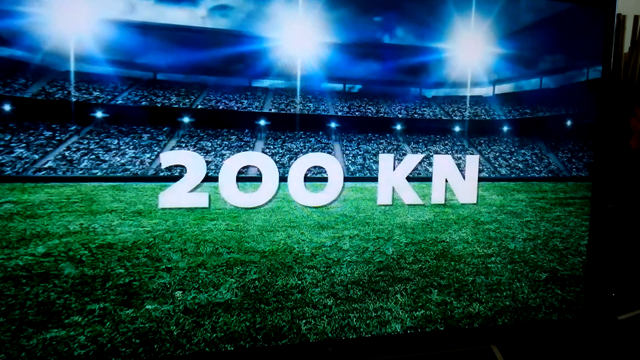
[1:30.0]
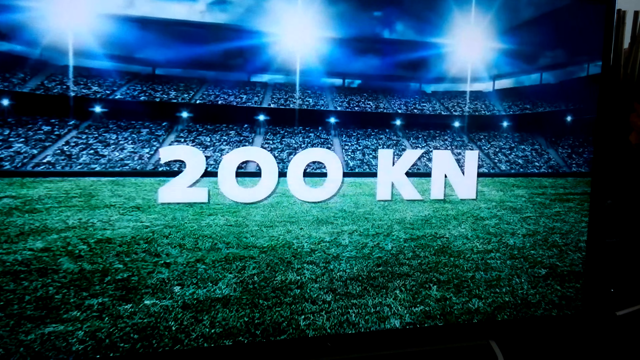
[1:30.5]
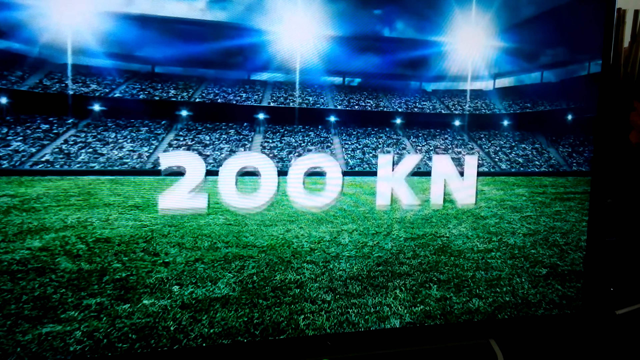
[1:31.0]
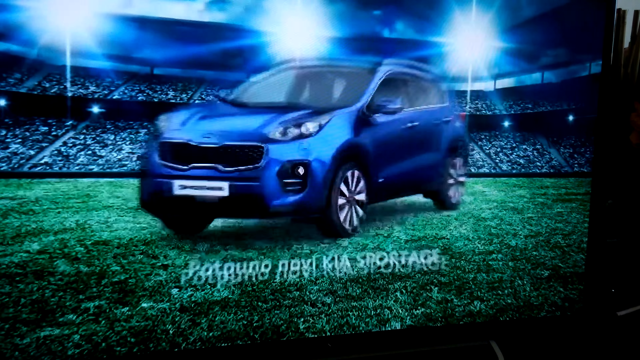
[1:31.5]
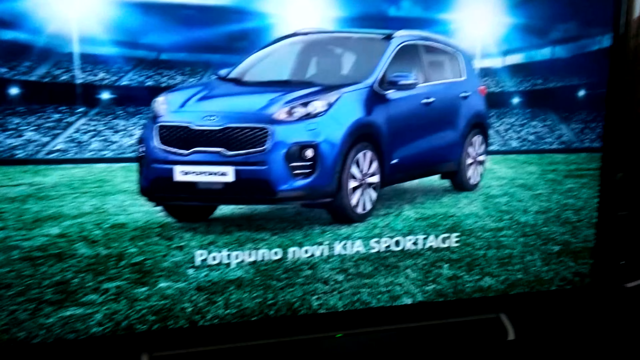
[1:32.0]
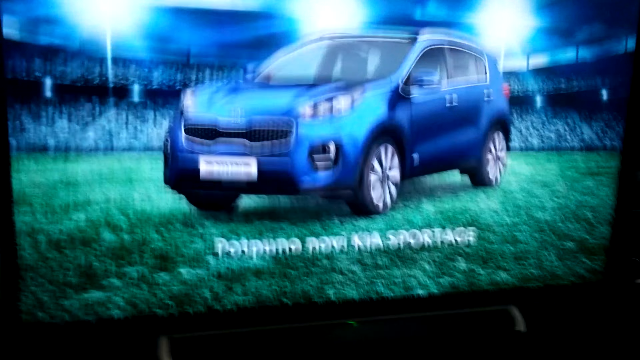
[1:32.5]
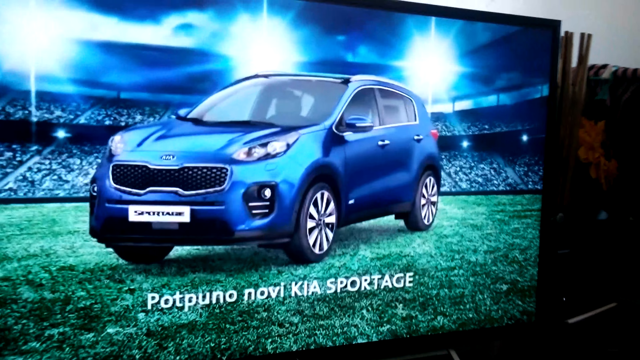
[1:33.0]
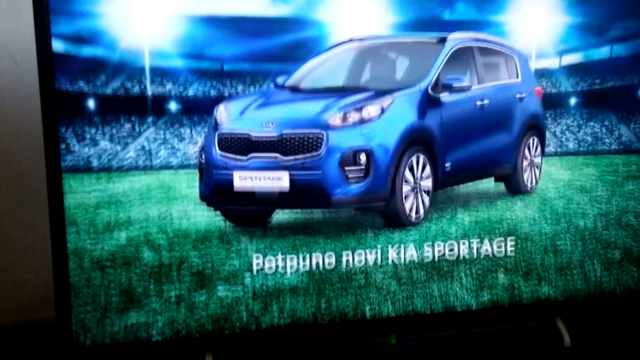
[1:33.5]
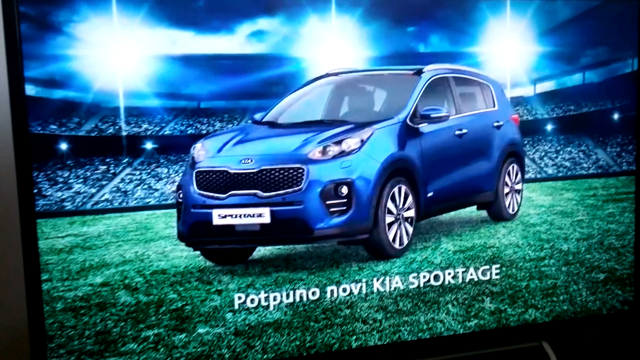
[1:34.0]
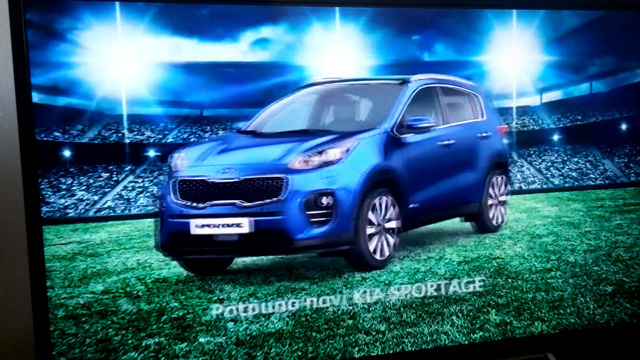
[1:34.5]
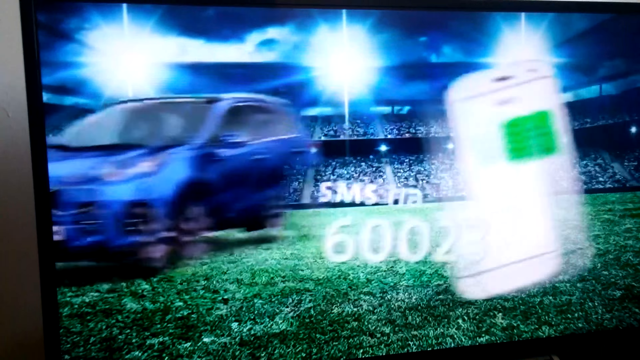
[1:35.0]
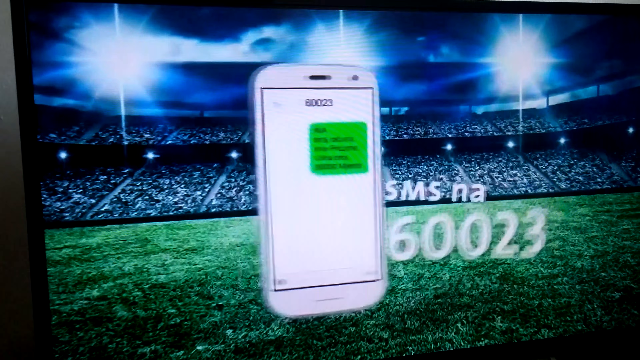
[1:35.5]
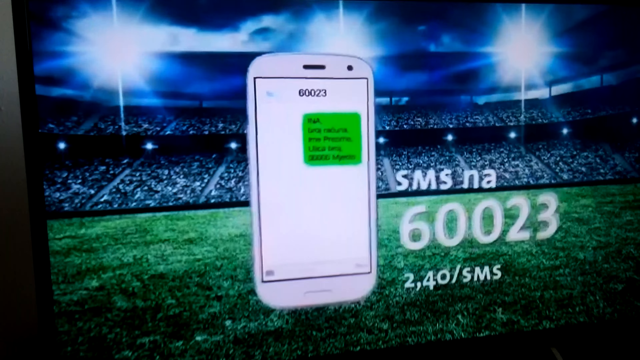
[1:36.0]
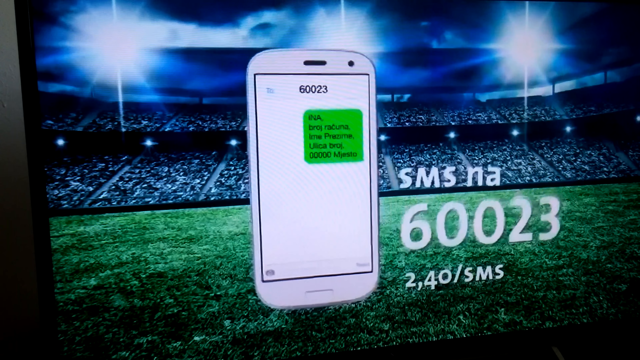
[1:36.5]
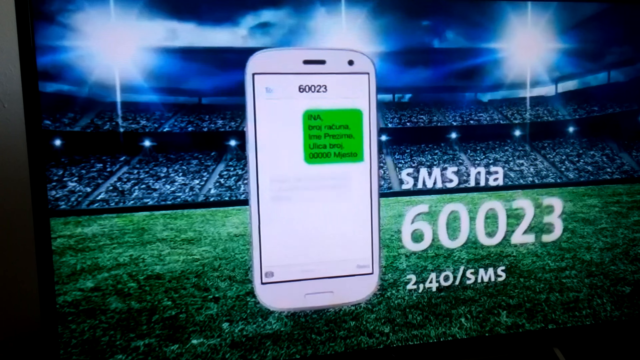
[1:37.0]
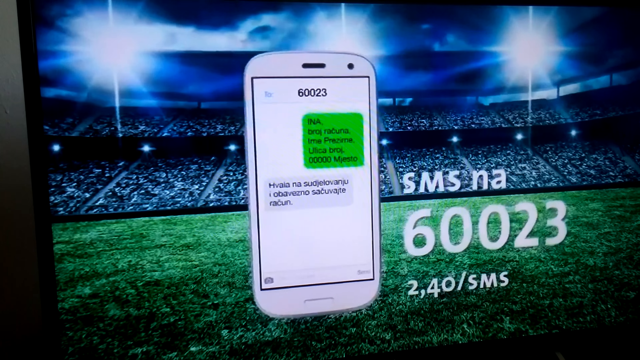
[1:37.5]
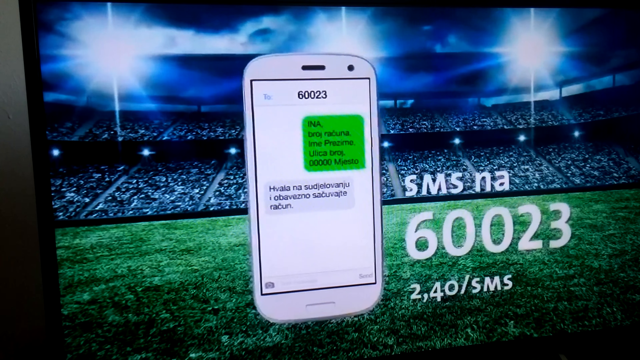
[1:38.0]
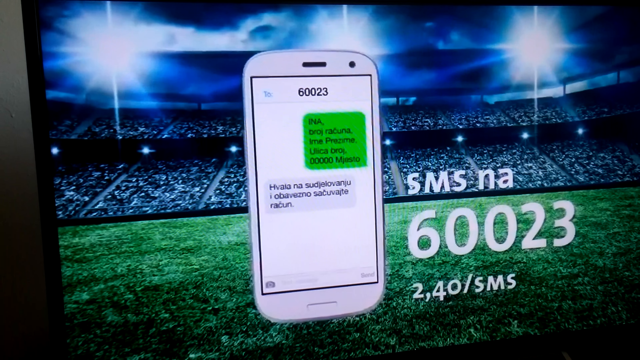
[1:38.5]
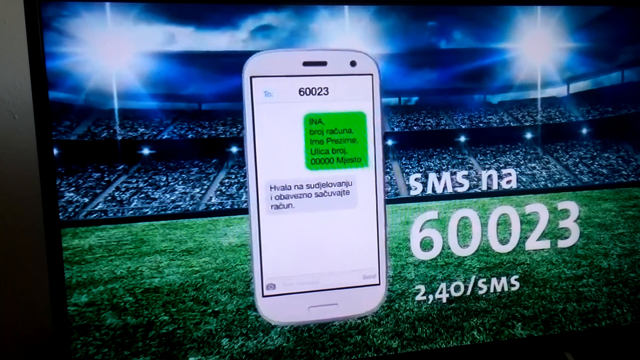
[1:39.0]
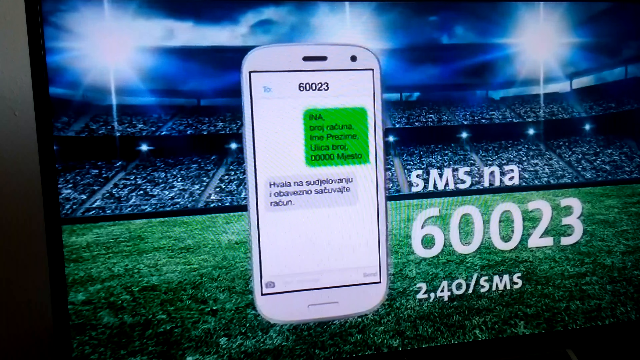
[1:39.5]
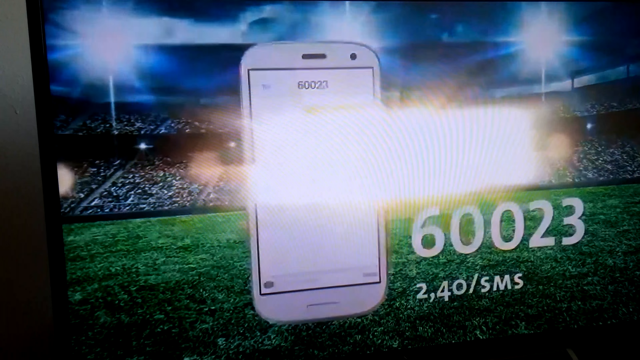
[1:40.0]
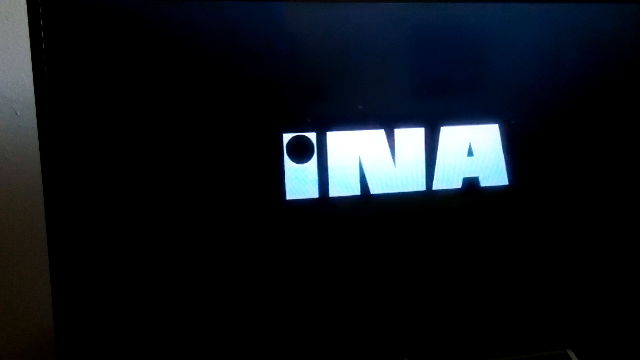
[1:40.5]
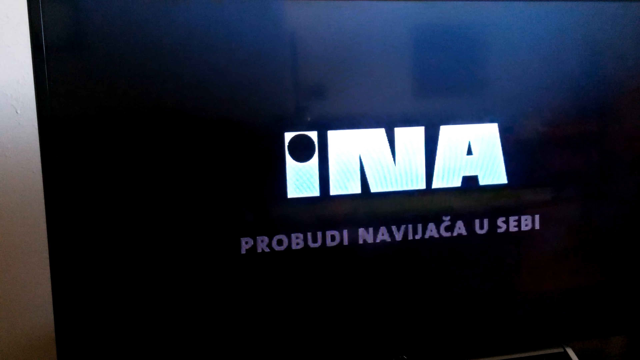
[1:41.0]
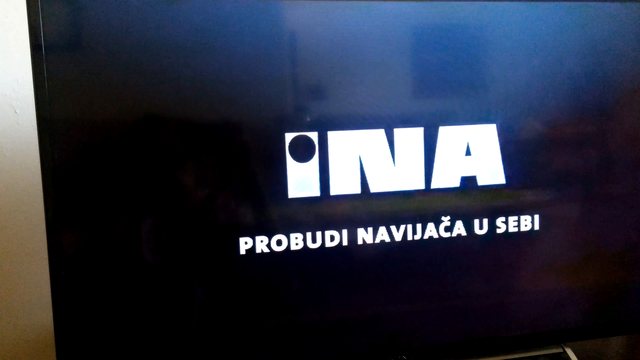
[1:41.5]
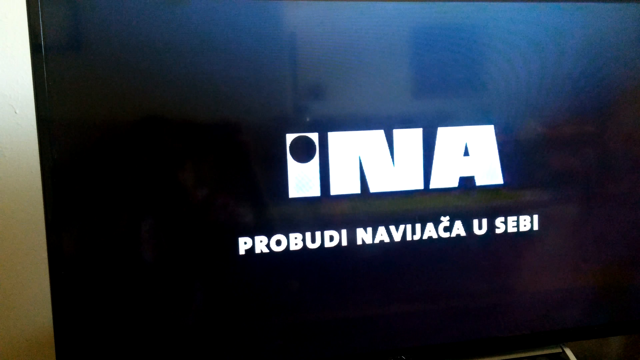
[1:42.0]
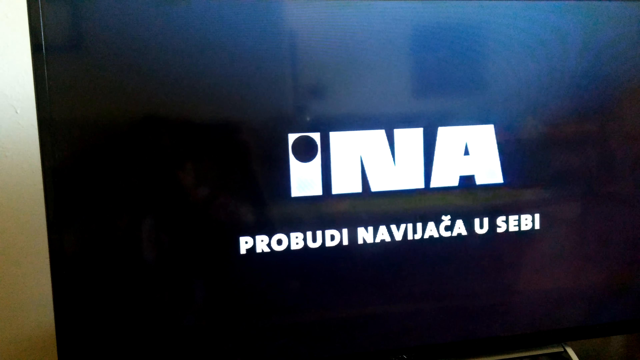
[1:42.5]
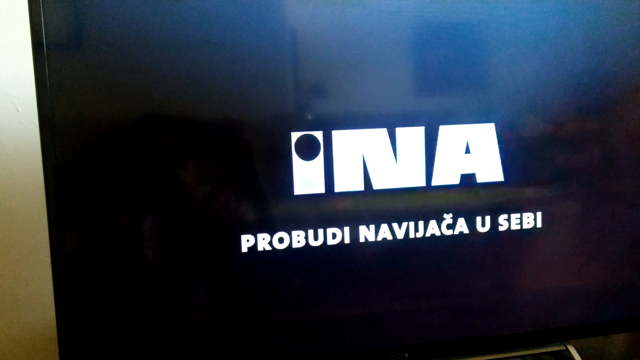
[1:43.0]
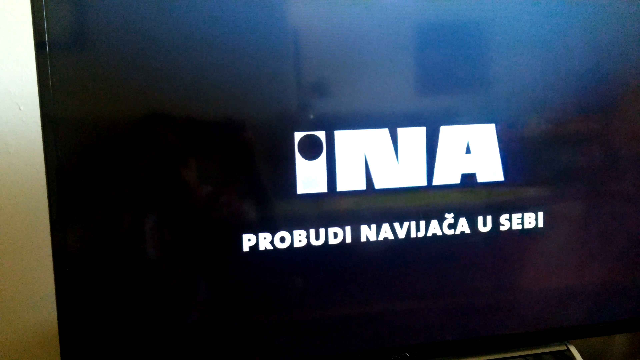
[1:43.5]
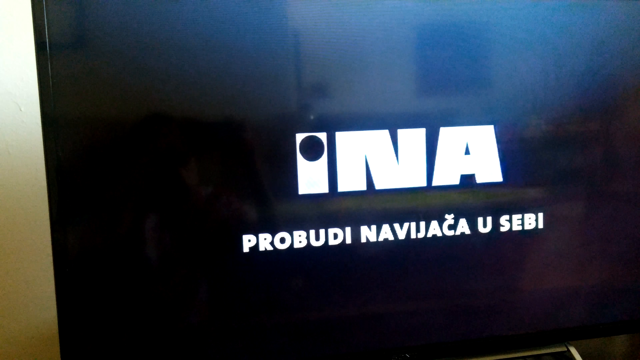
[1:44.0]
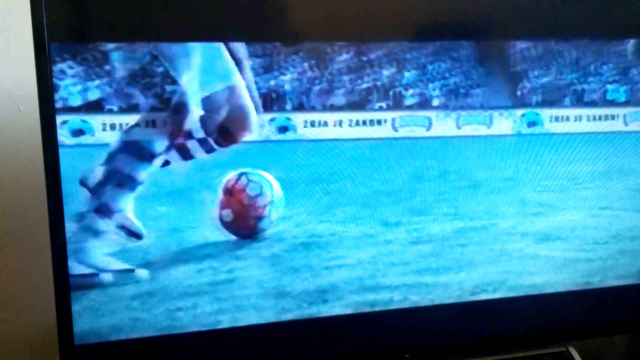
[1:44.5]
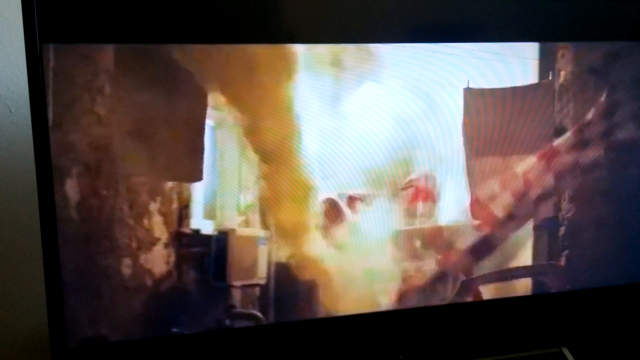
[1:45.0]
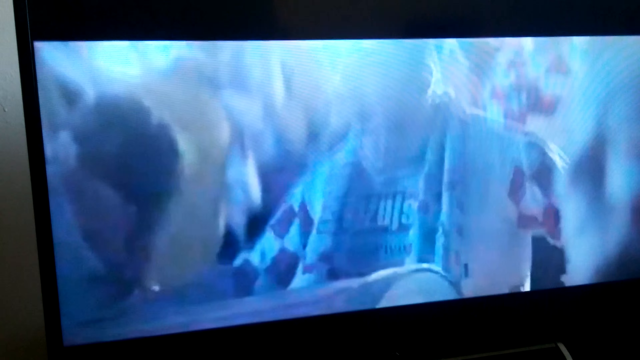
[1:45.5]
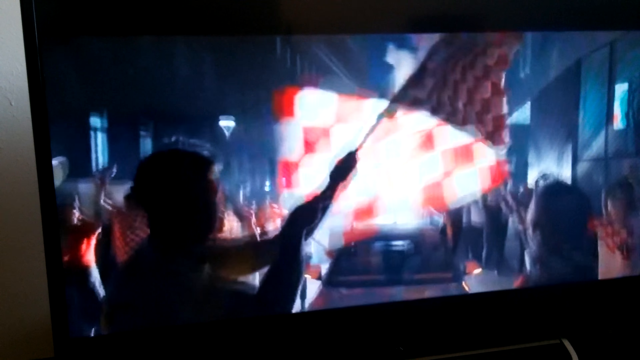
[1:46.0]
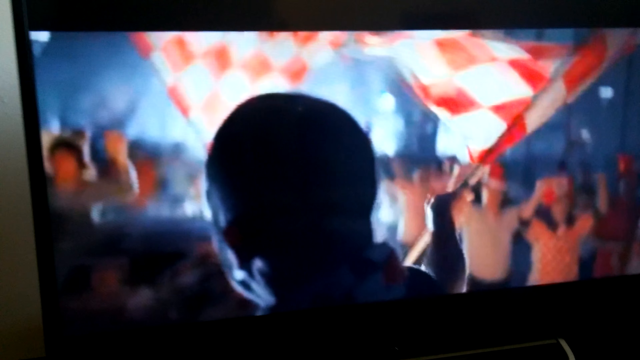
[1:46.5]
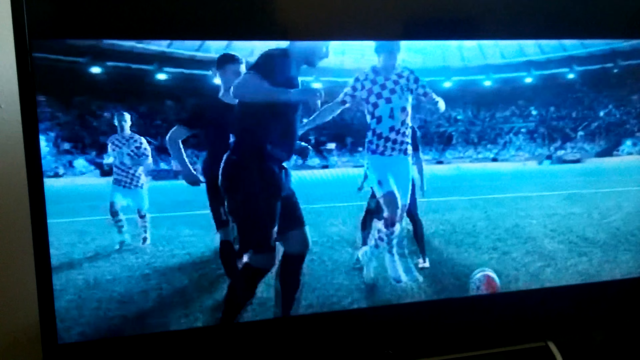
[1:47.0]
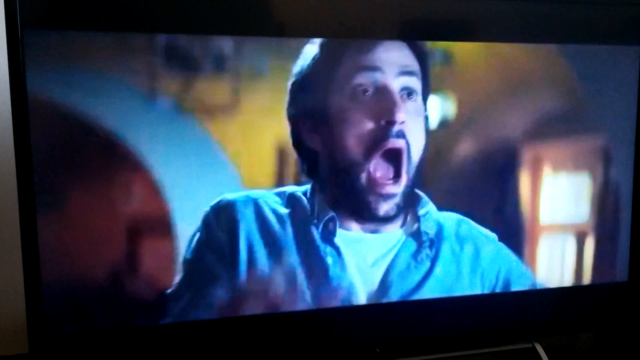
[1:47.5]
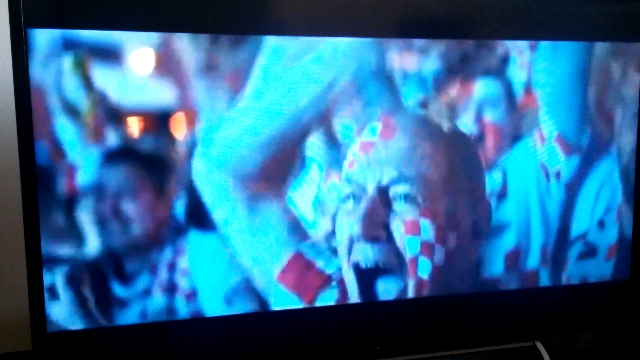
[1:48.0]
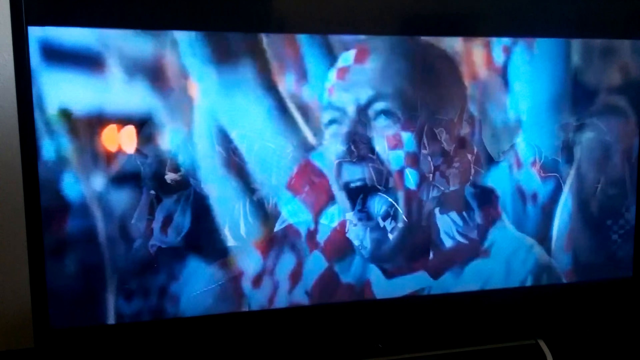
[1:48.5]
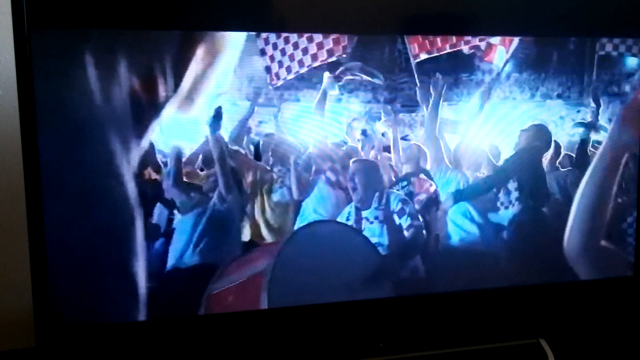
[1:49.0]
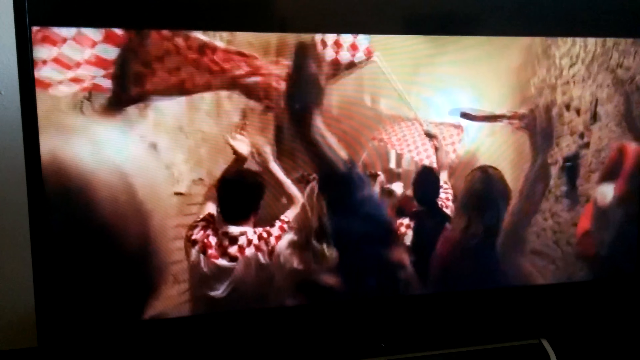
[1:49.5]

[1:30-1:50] A soccer field and stadium appear with lights shining down, and "200KN" is written in white font on the screen. A blue SUV, a Kia Sportage, appears, with its name written underneath. The camera shakes for a bit, showing that someone is recording a television screen with their camera. A cell phone appears on the screen with the text "SMS NA60023240 / SMS", and a conversation in bubbles appears on the phone. The screen shifts to text beginning with "INA". It briefly shows a soccer field, then a series of different scenes of what looks like people enjoying soccer: people jumping up and down and people watching a game. The commercials go from one to the next with different soccer themes. Finally, a group of soccer players and people watching the game appear, looking really excited.